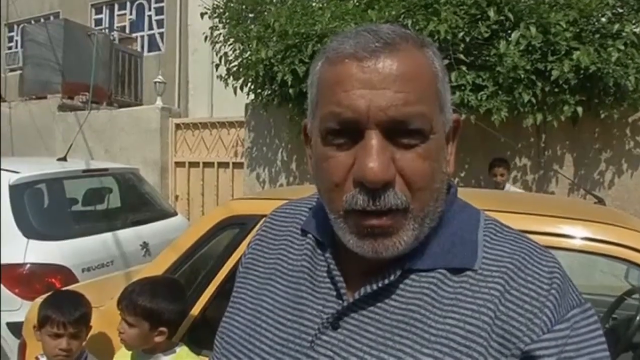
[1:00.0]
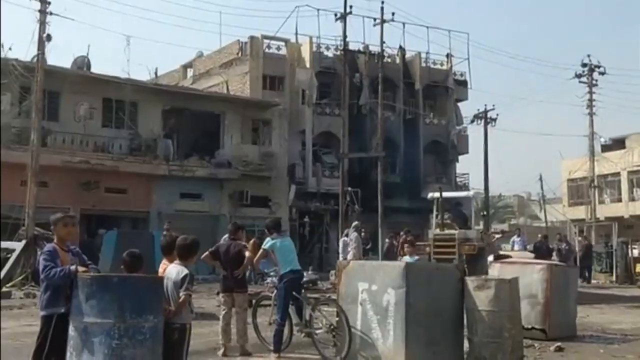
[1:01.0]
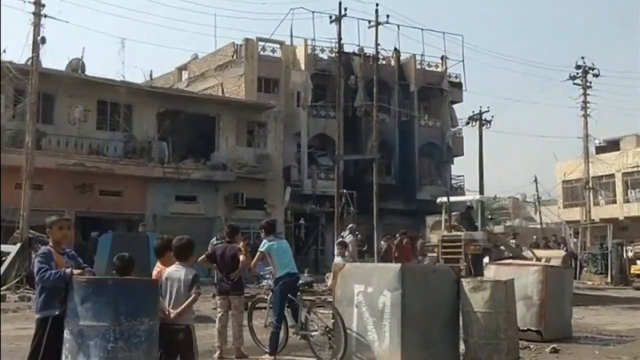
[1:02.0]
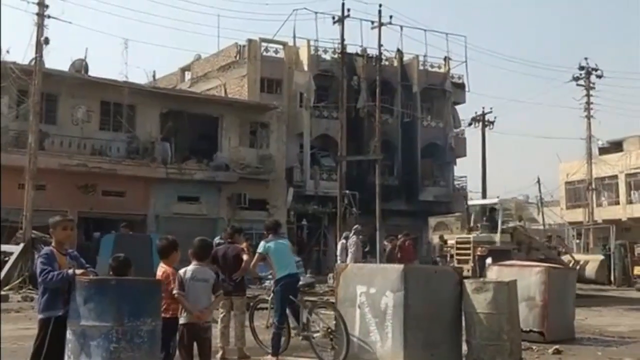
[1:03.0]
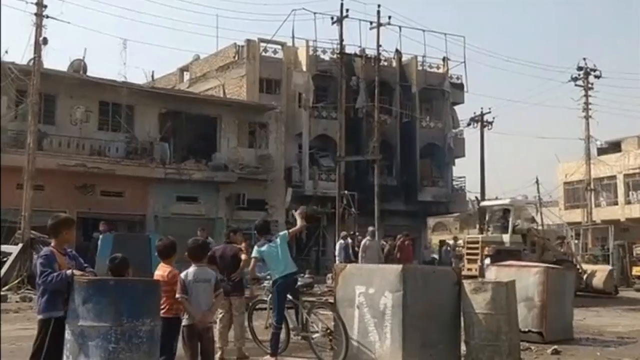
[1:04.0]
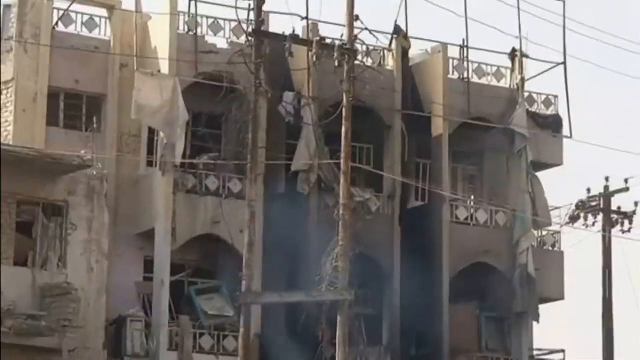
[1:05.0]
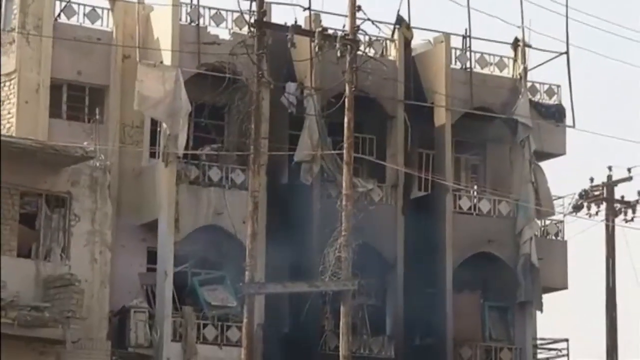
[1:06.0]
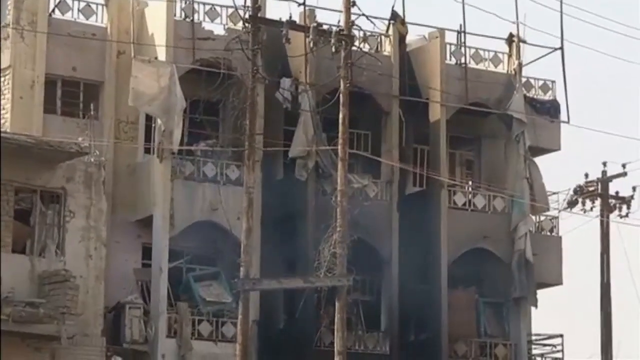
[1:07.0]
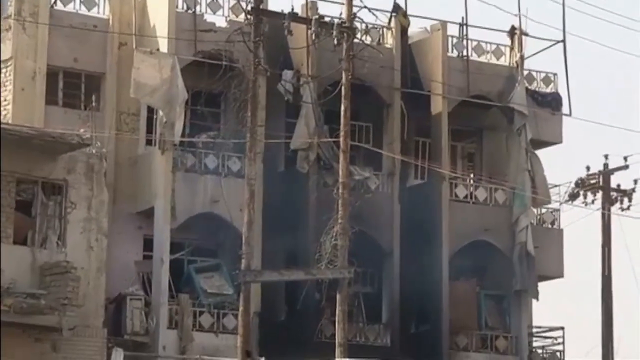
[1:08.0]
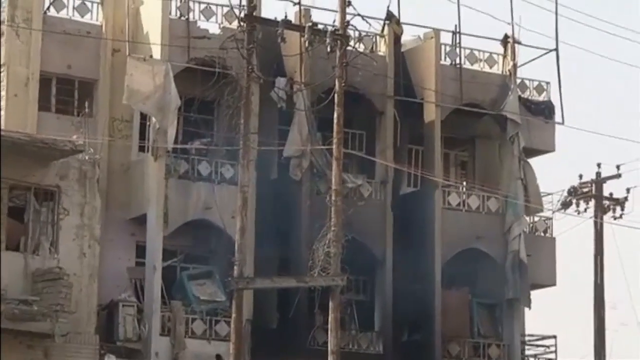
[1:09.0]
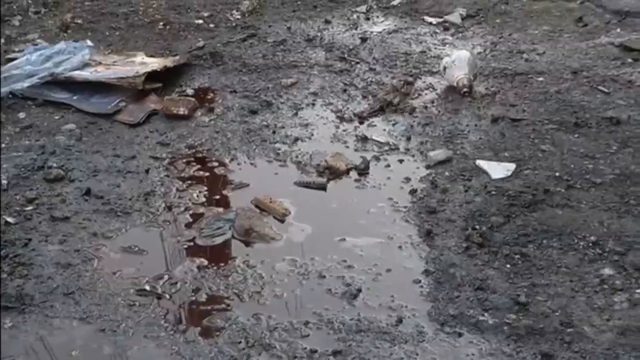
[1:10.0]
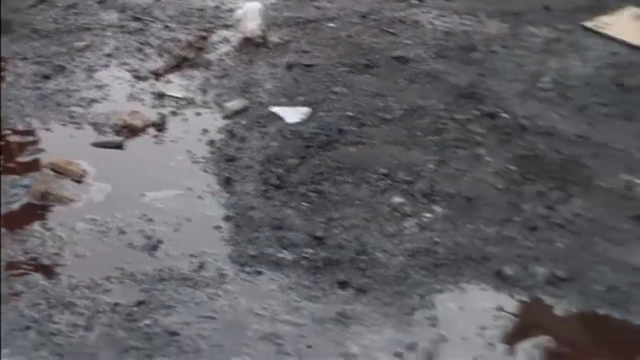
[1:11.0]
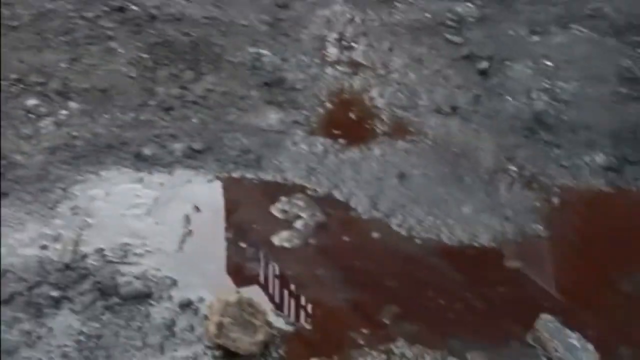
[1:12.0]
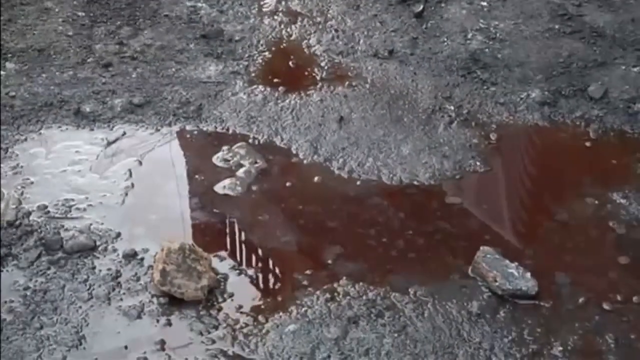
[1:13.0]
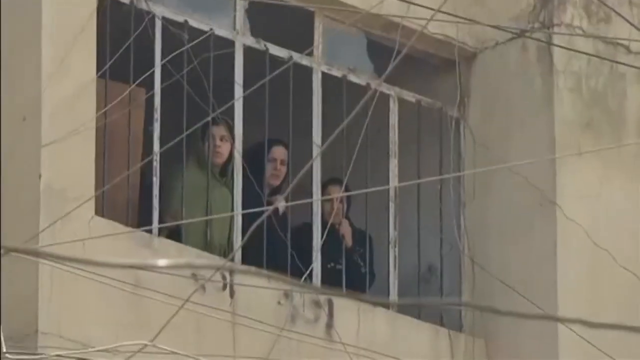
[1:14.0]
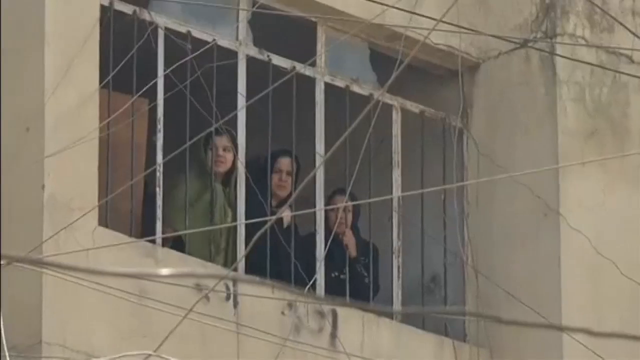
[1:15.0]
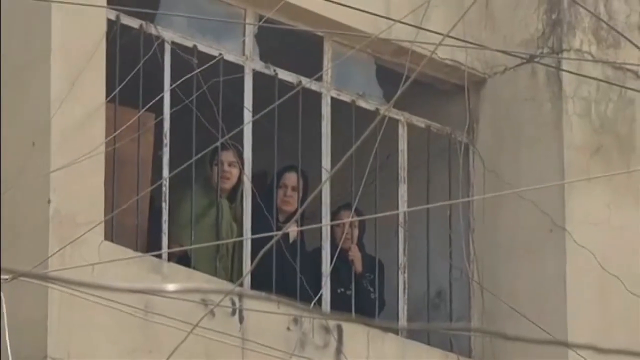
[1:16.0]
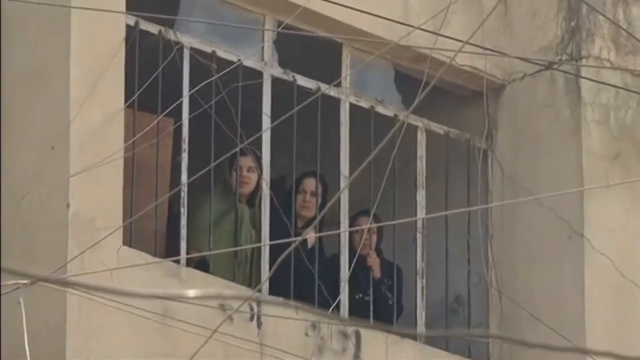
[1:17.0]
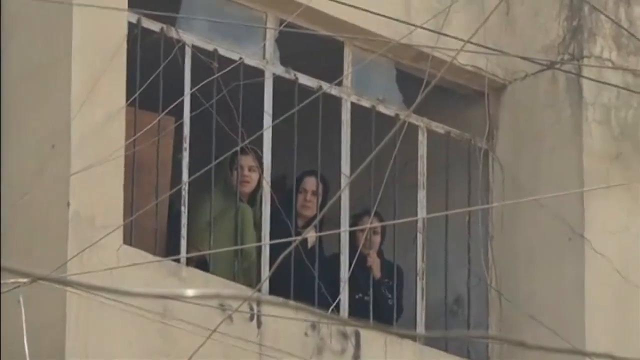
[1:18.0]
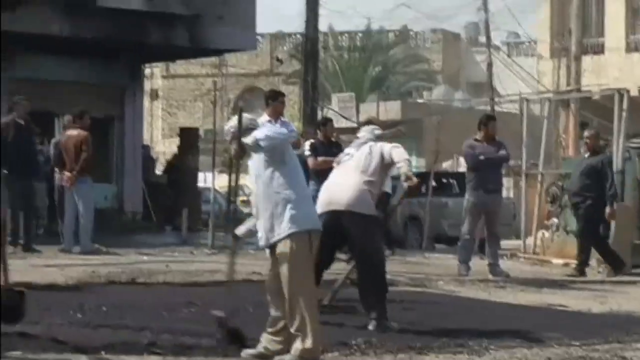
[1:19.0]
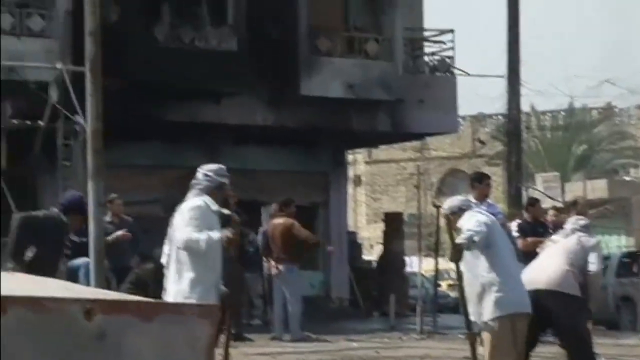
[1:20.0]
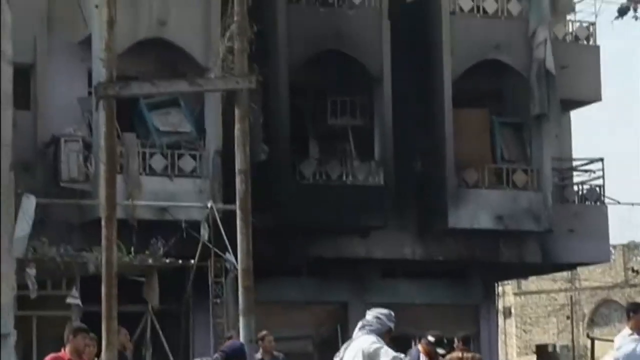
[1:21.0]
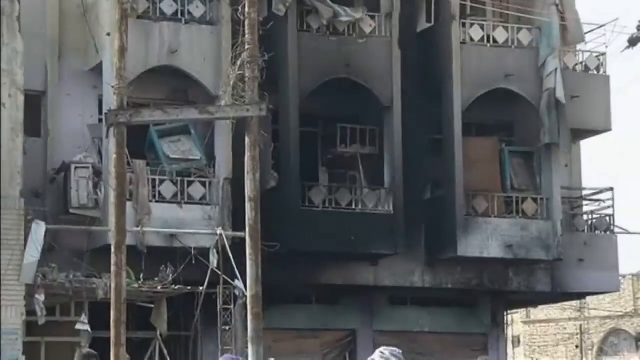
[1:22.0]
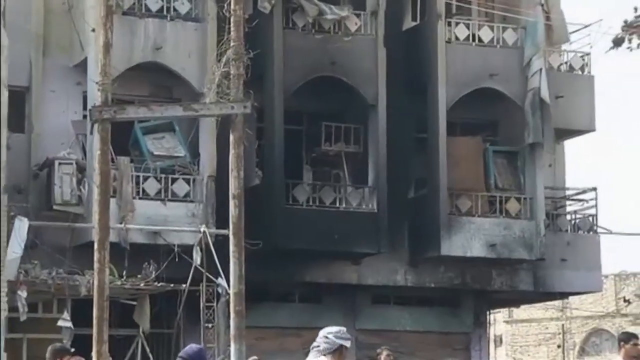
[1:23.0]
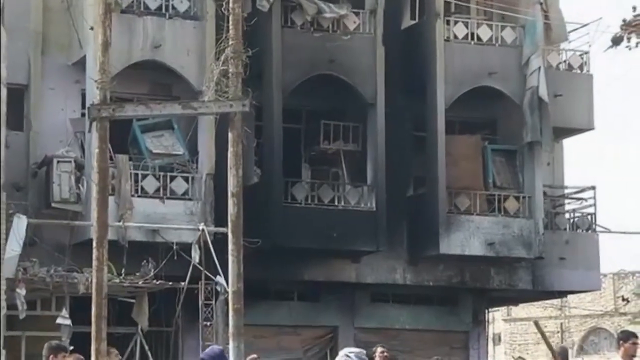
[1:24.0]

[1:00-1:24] The scene changes, and in the background on the left is a building that appears to be under construction. A close view of the building shows that it looks like it has been hit by a missile or some sort of rocket, with damage on its side and light smoke visible. The scene changes to the ground, which looks very muddy, with a puddle of water in the middle. The camera moves to the right, showing broken glass on the ground and then a dark, brown-reddish liquid on the ground. The scene changes to three women on an upper floor of a building looking out a window covered by thin bars. Next, a ground view shows people cleaning up the mud, damage and debris on the ground. The camera shifts upward to the left, showing the damaged part of the building, which appears to be where the bomb or missile hit it: the middle is very dark and black, and some areas look very busted through, as if something very powerful hit it.